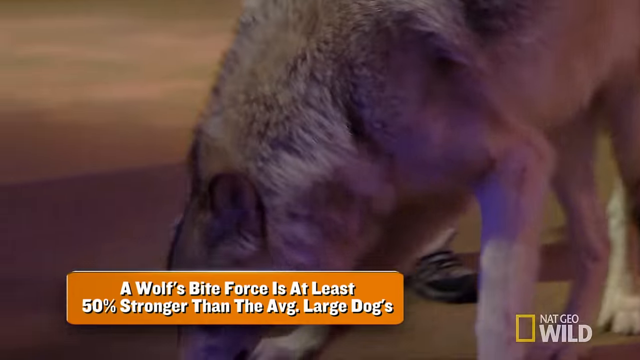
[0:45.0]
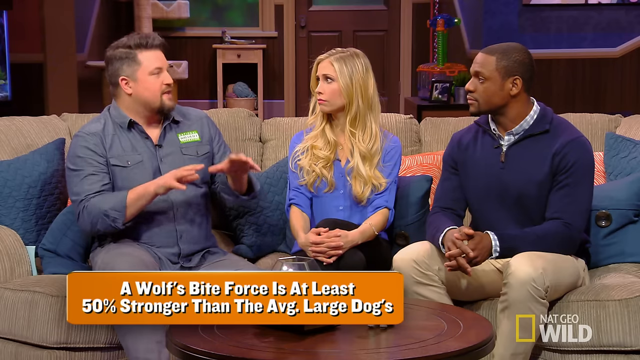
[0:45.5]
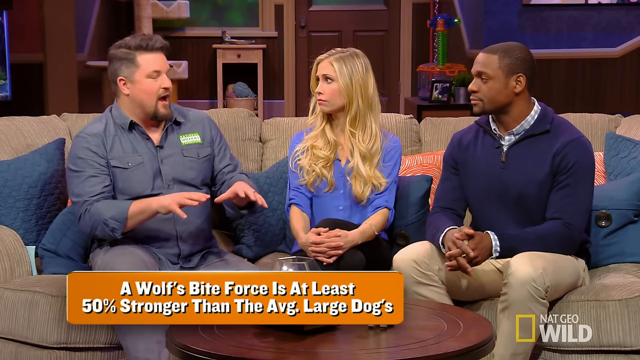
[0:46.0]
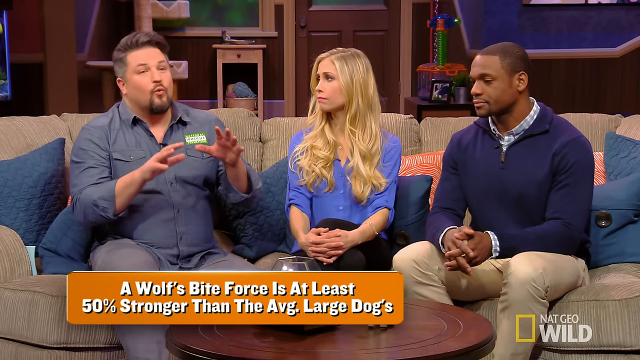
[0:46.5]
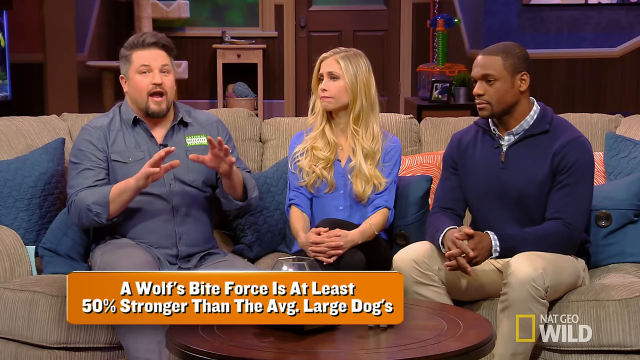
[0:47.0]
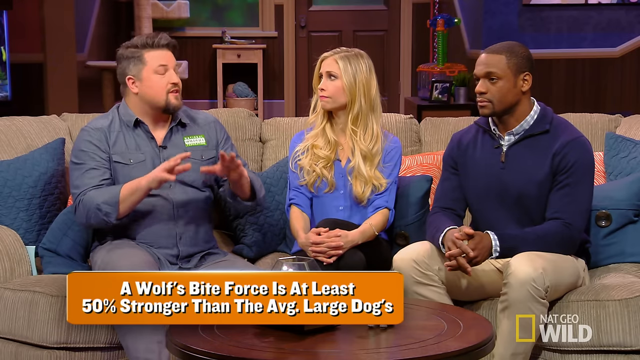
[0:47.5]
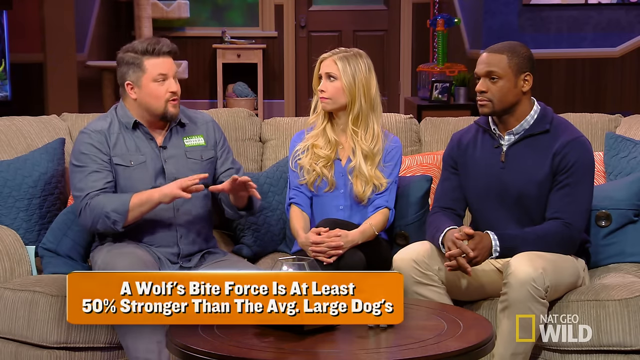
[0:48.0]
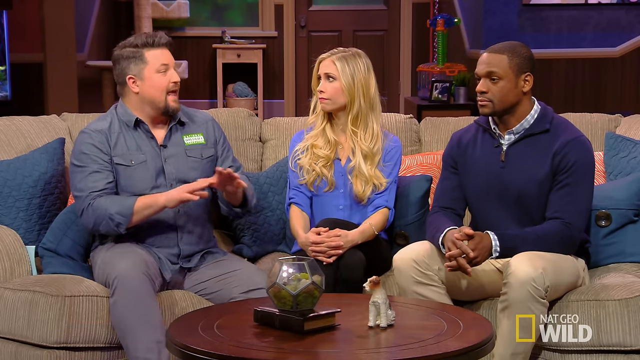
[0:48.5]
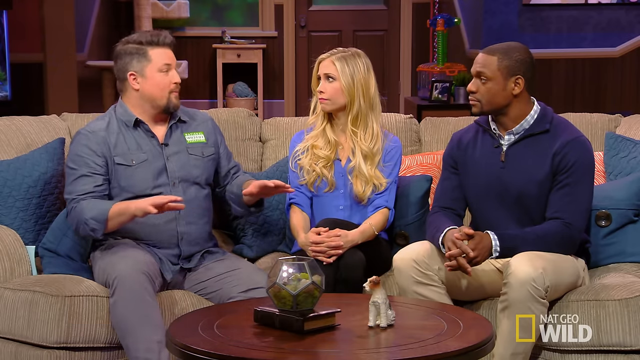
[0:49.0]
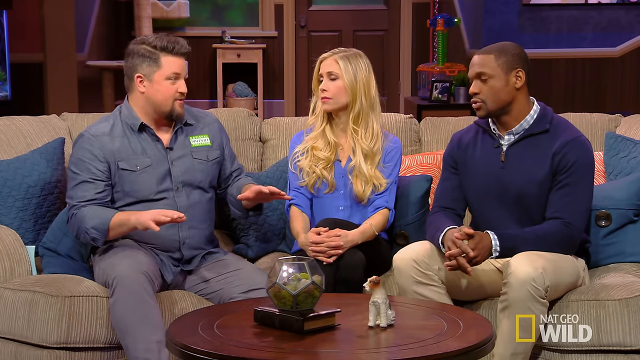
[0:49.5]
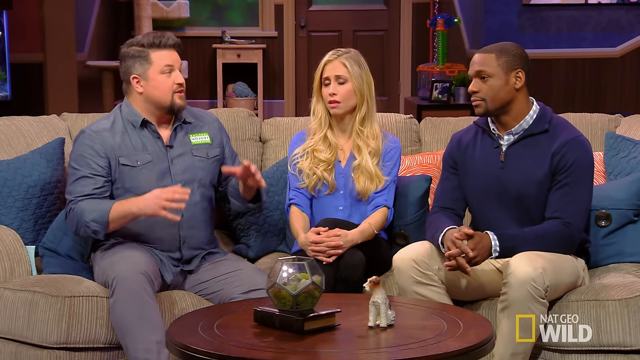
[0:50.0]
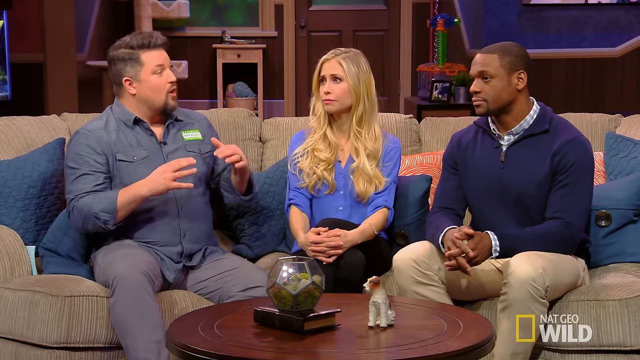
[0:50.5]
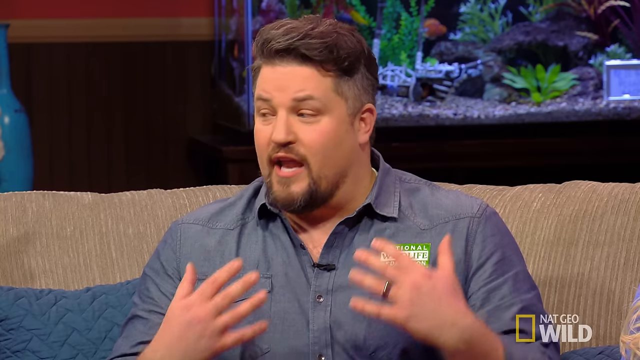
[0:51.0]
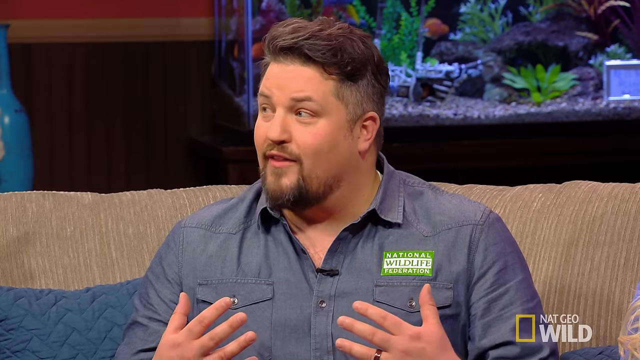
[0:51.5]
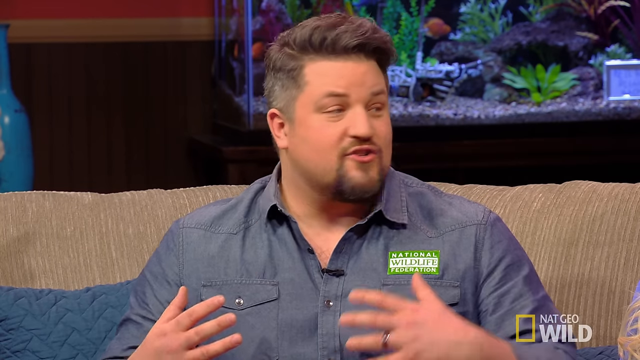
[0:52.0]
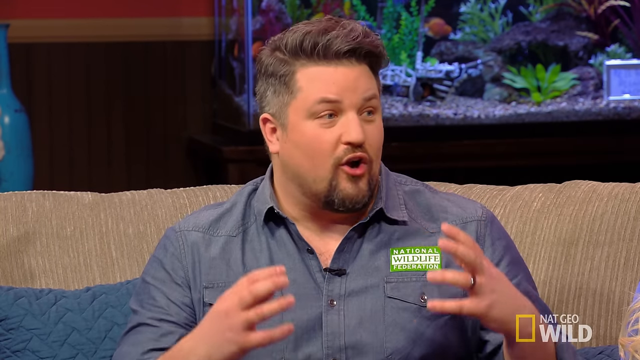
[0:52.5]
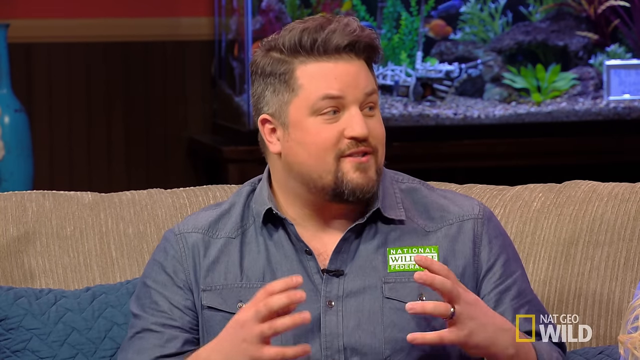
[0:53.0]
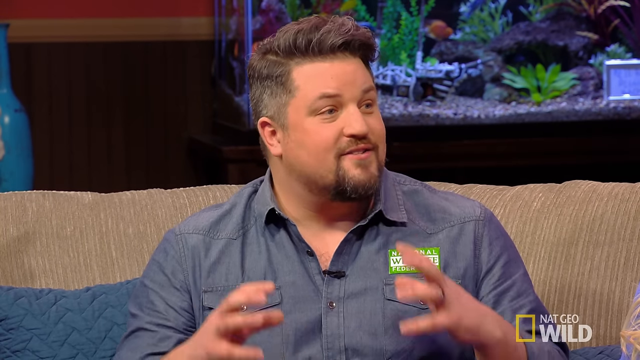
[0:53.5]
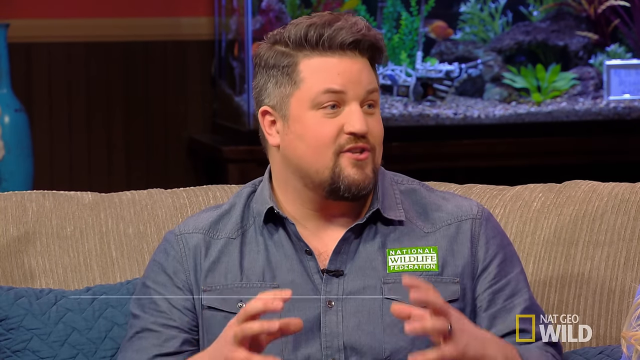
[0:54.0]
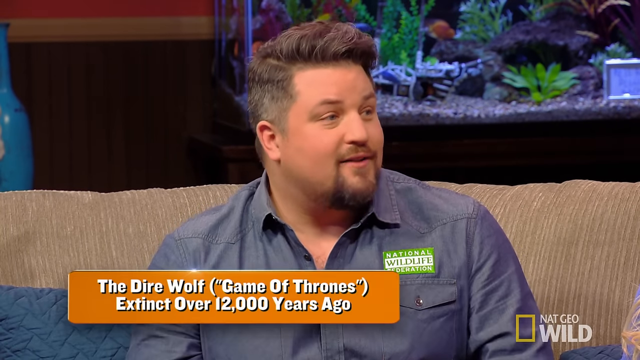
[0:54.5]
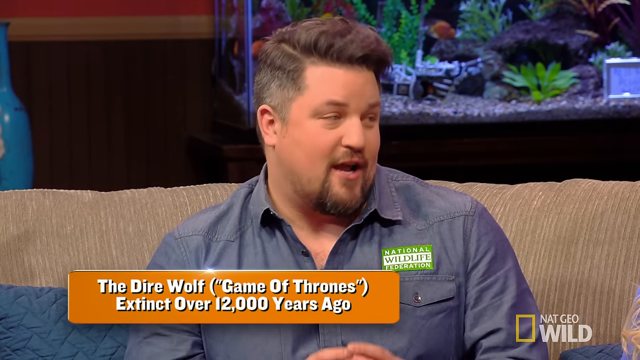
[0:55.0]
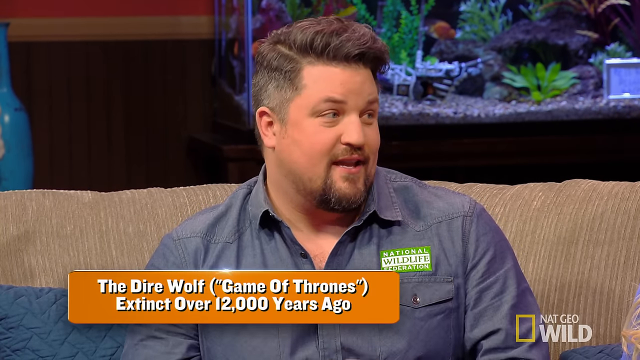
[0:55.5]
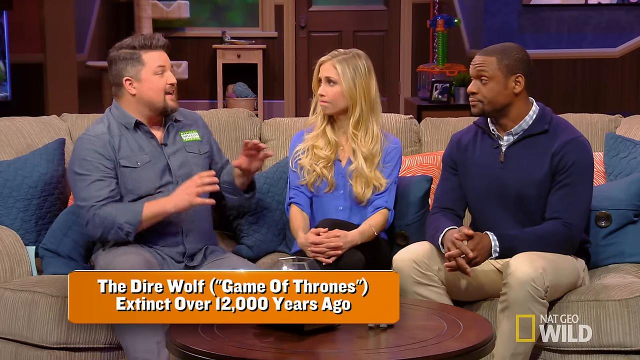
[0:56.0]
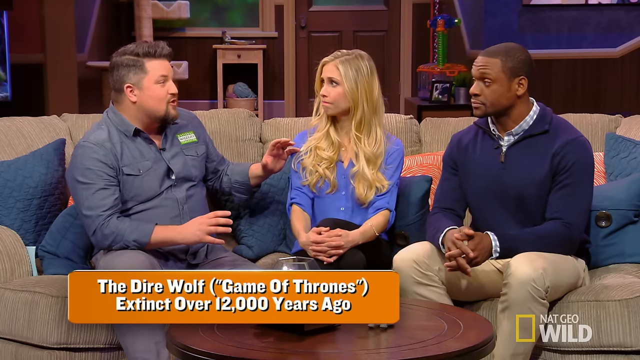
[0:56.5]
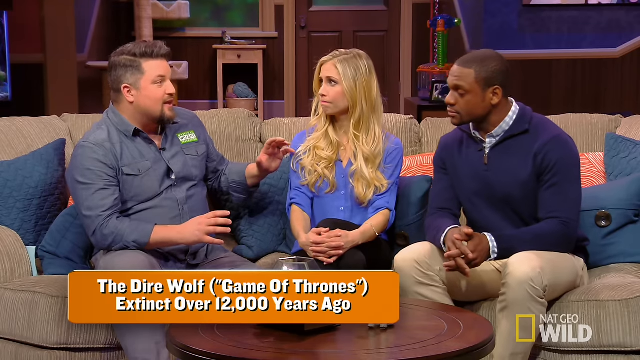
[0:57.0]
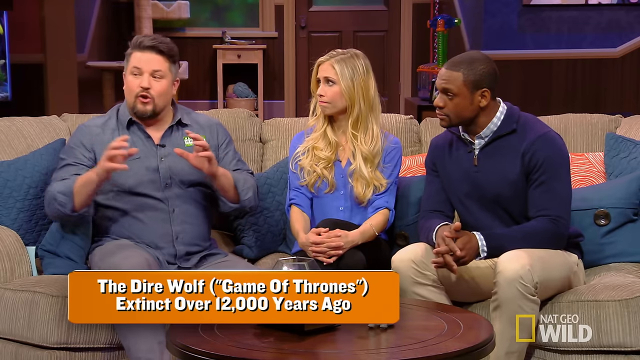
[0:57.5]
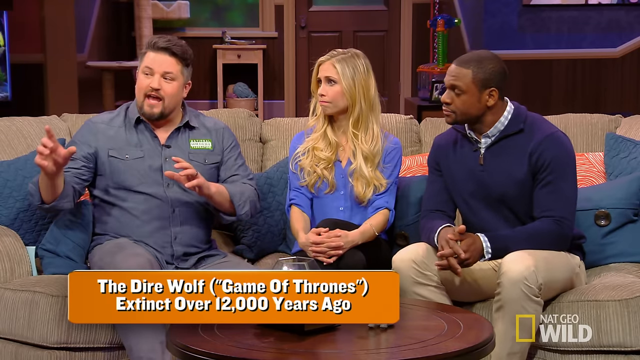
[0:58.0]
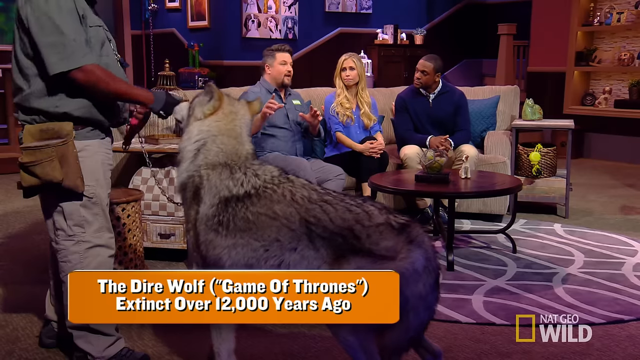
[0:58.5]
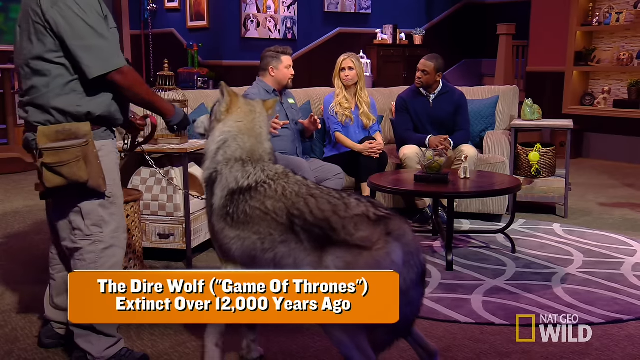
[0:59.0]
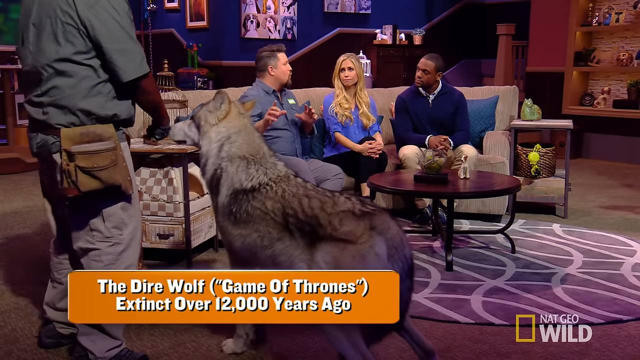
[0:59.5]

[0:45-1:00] The camera is zoomed in on the face of the man, who has brown hair. He keeps talking to the white blonde lady and the black man, making many demonstrations with his hands, and he seems to have an excited expression. They are sitting on a brown couch, and there are a lot of objects around the room.